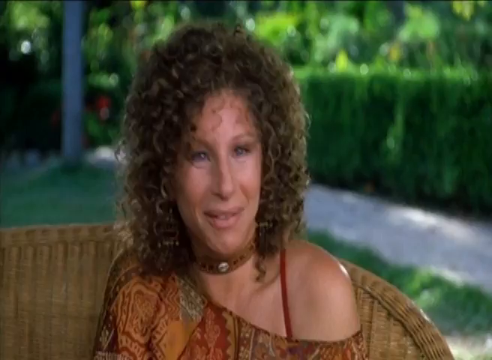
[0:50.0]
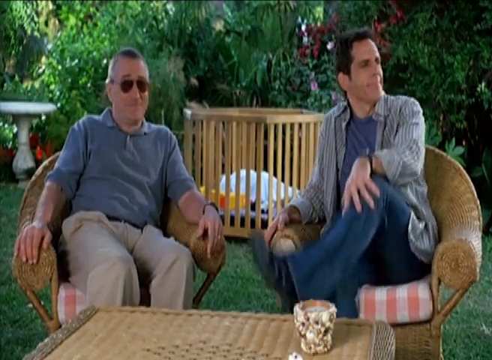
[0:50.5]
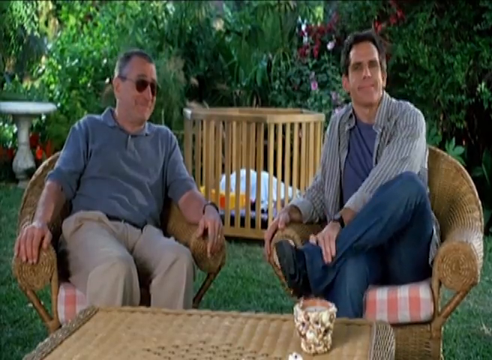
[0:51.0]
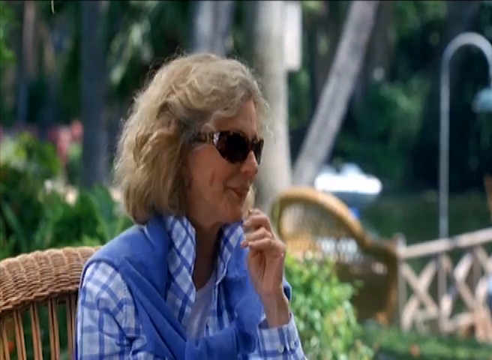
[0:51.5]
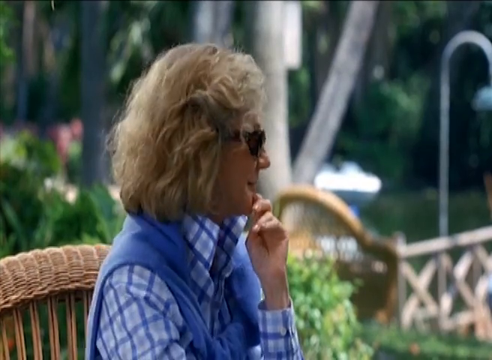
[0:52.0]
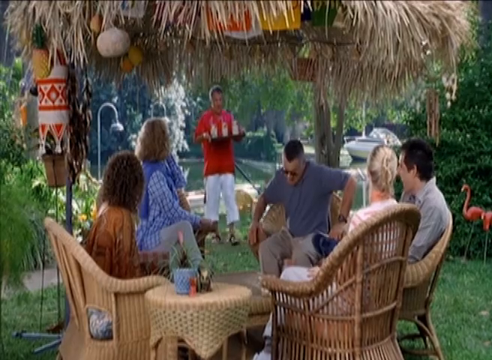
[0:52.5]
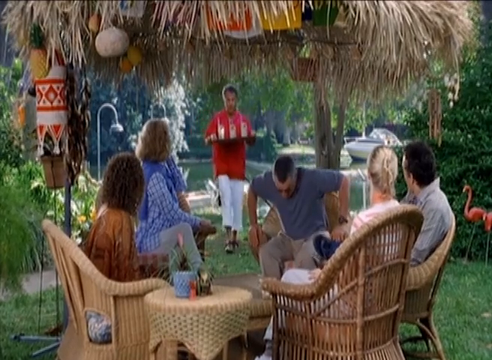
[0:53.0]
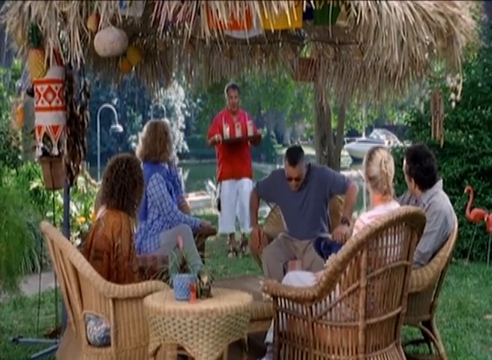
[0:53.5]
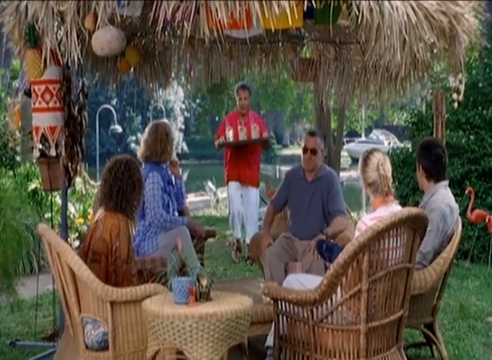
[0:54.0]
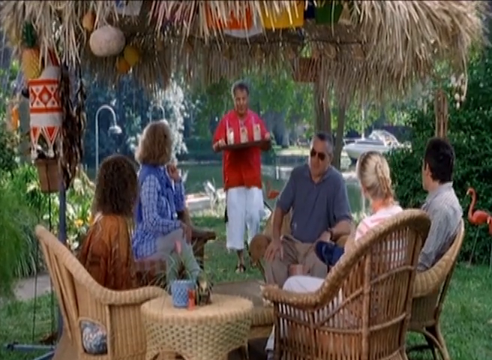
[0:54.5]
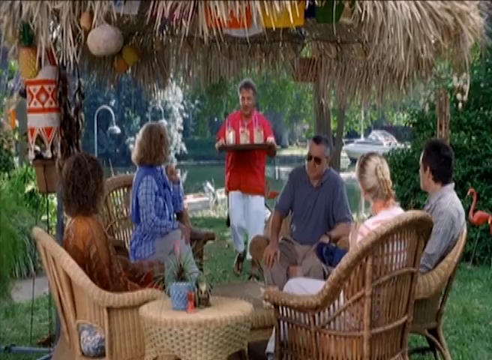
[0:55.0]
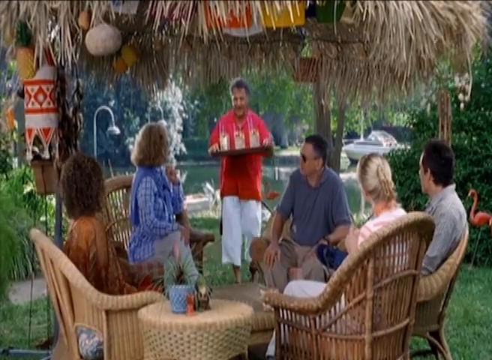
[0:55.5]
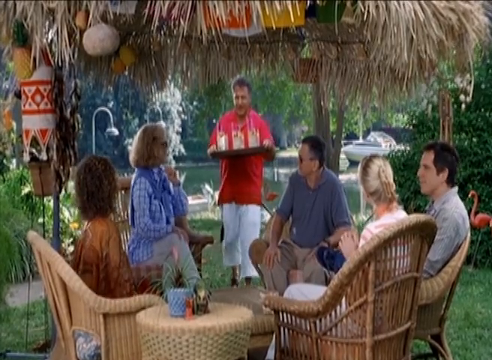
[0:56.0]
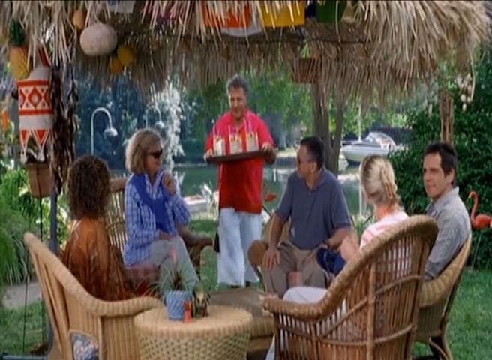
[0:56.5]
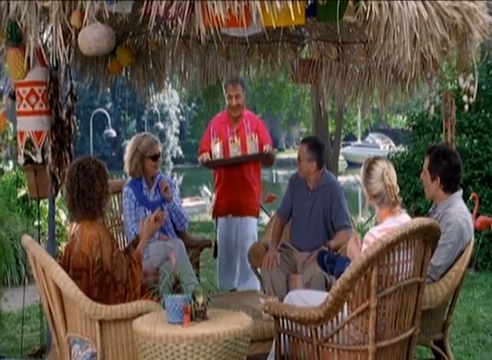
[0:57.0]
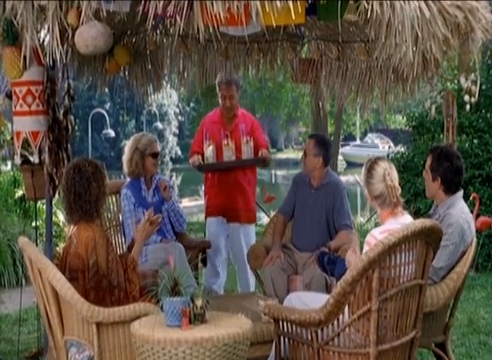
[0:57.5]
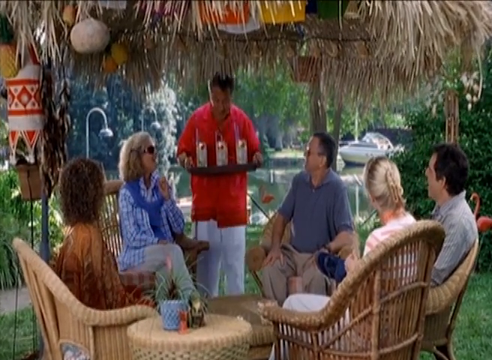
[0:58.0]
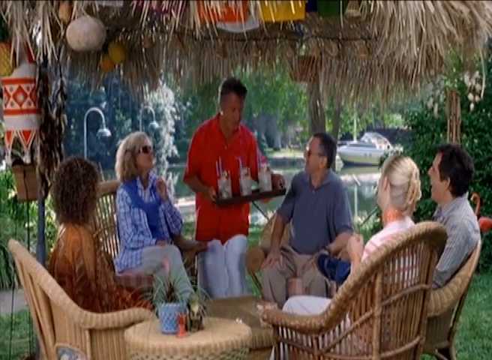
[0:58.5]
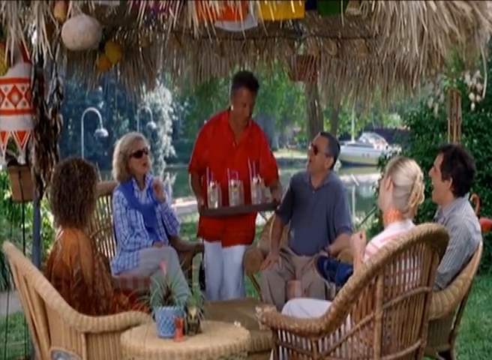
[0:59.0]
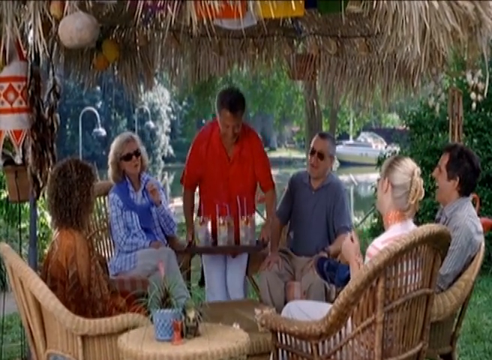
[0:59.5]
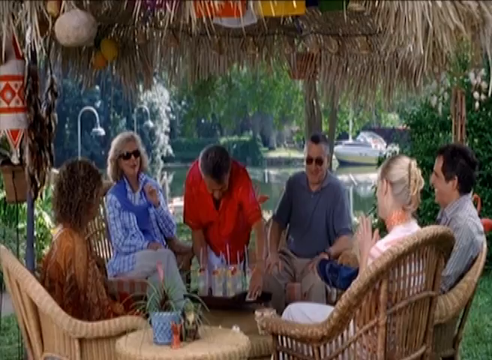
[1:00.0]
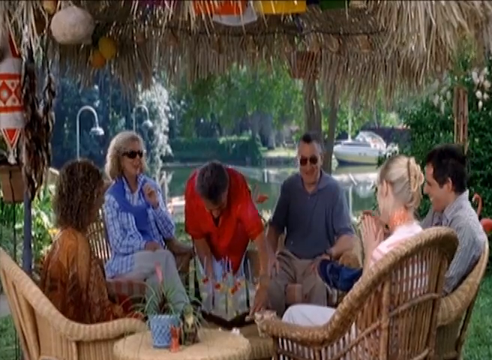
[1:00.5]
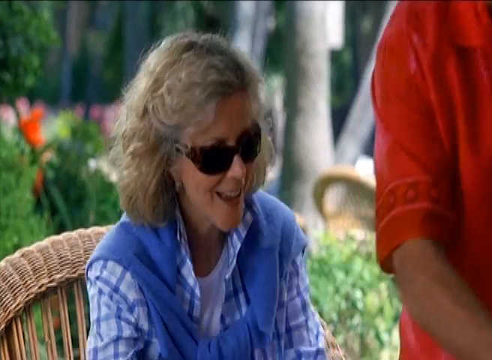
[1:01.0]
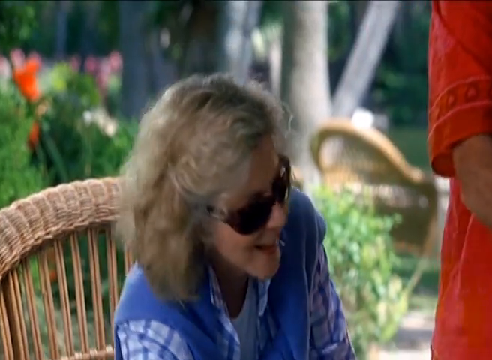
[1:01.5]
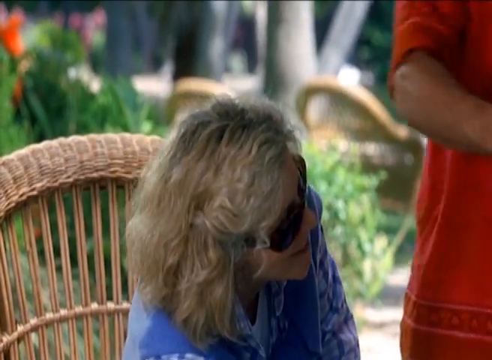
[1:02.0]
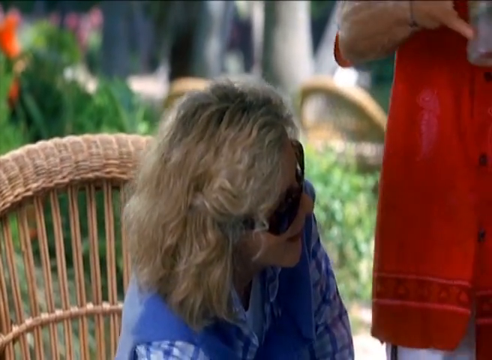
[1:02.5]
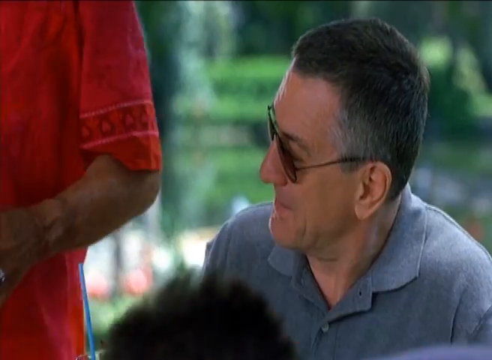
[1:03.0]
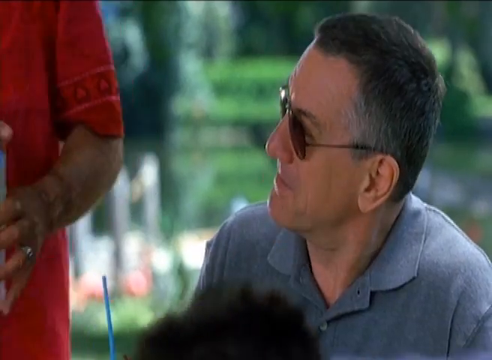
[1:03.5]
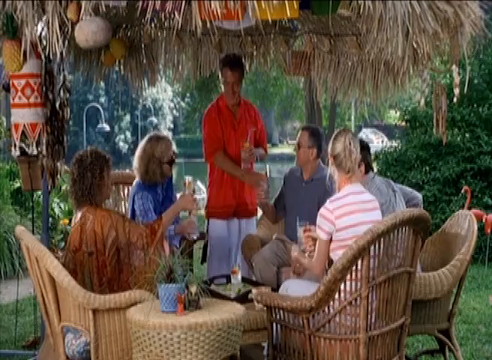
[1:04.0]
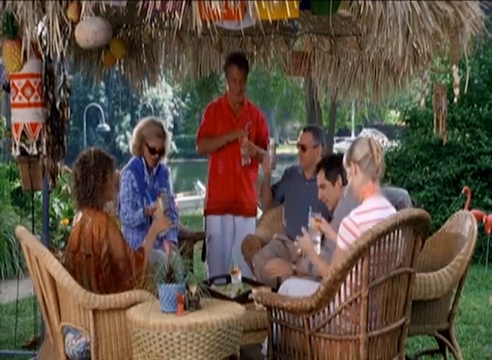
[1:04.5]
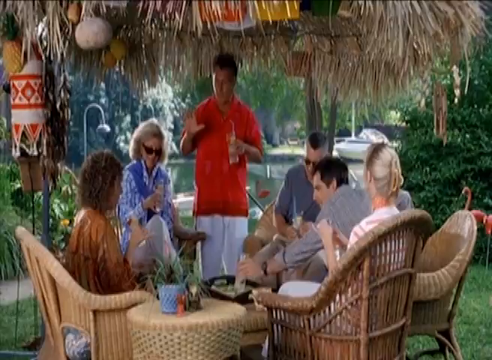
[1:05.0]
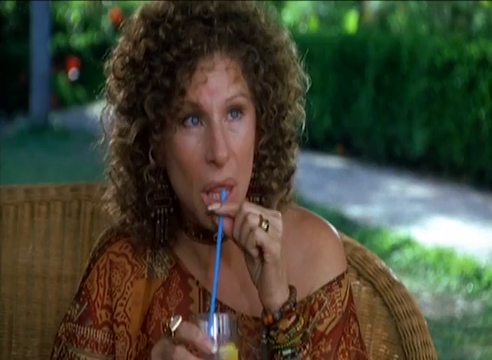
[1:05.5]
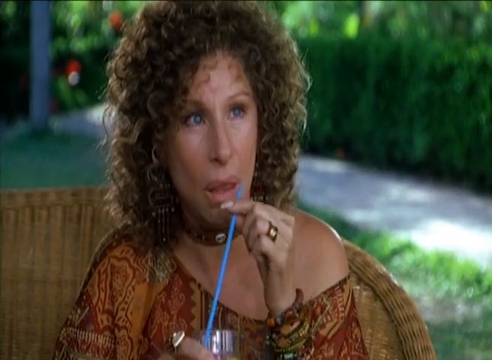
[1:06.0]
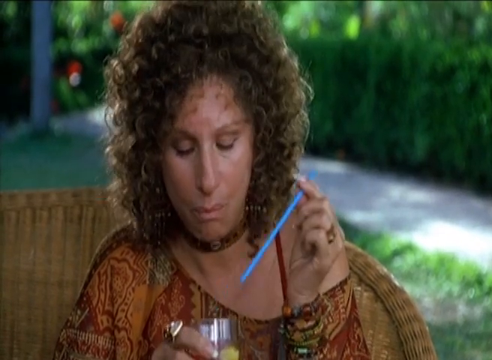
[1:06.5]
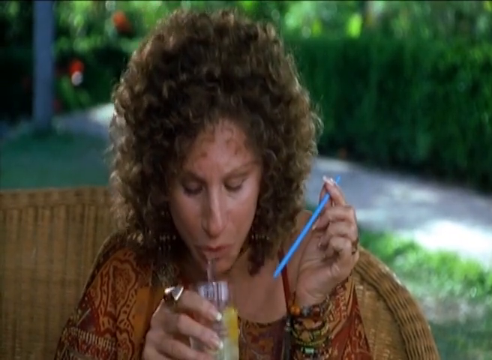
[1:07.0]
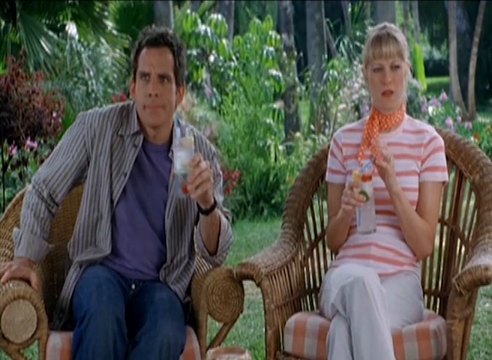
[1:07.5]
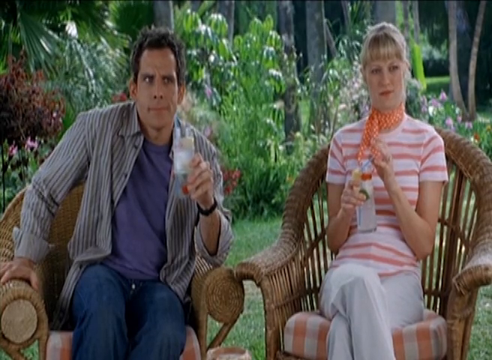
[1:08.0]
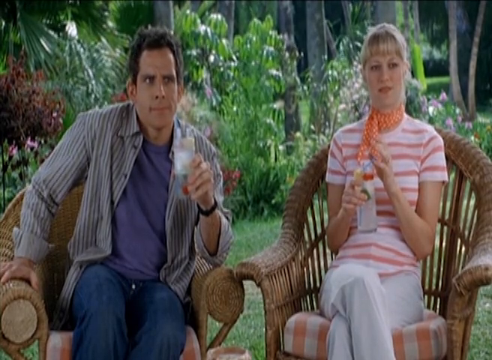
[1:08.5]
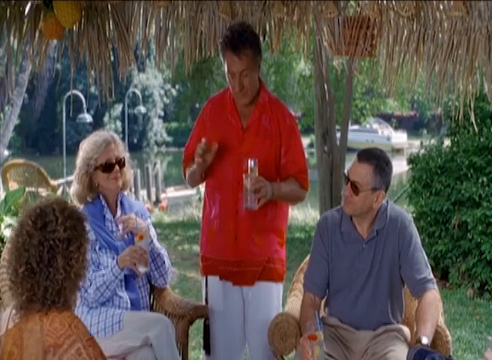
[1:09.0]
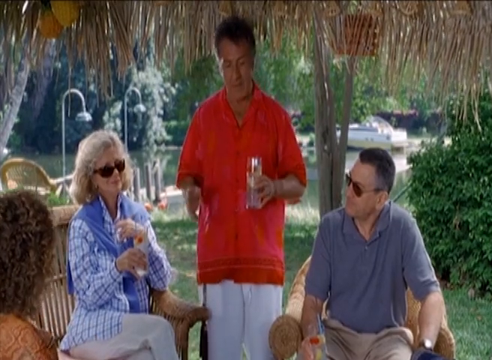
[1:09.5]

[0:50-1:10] The older lady with the curls talks and smiles. The older gentleman and the young man sit beside each other, looking very relaxed; the young man, wearing jeans, puts his left leg over his right leg, and both seem to be looking sideways and smiling. Another older lady appears, wearing glasses, with short blonde hair, a plaid shirt and a blue sweater over it; she smiles with her left hand touching her chin and is slightly turned sideways. While the five people are sitting, a sixth person comes into the shot: an older gentleman in a red top and white flared pants carrying a tray of drinks that look like cocktails. He walks slowly toward the seated group, everyone looks at him and smiles, and he sets the tray down on the table. The older lady with blonde hair looks down at the drinks, smiling widely. The seated older gentleman looks at the lady and then at the older man in the red shirt, who is still standing, gesturing with his right hand while his left hand holds a drink. The older lady with curls tries to sip her drink through a straw, then spits it back into the glass. The young man and a young woman beside him, both seated, hold their drinks and look puzzled. The older gentleman in the red shirt, still standing with a glass in his hand, seems to be talking and gesturing with the other hand.